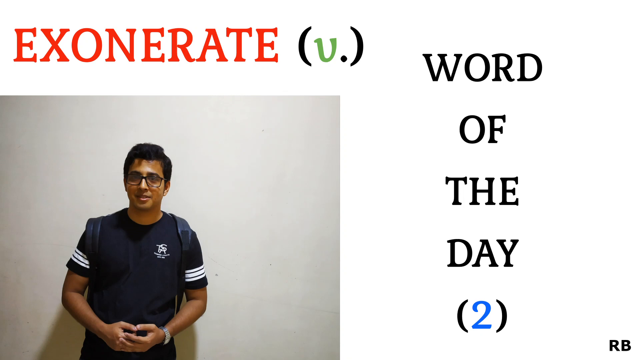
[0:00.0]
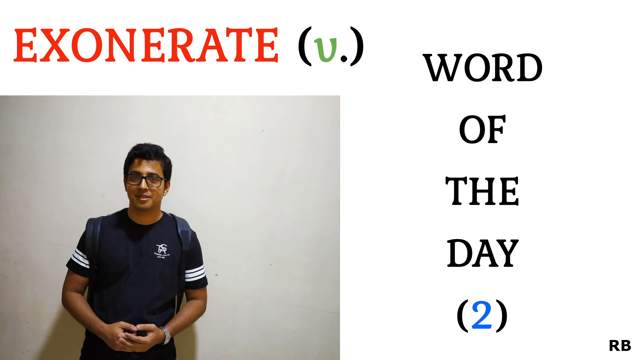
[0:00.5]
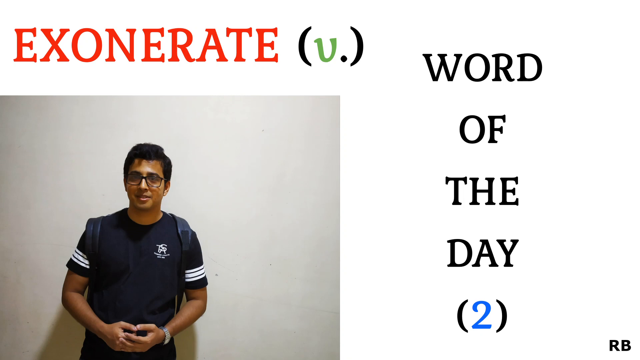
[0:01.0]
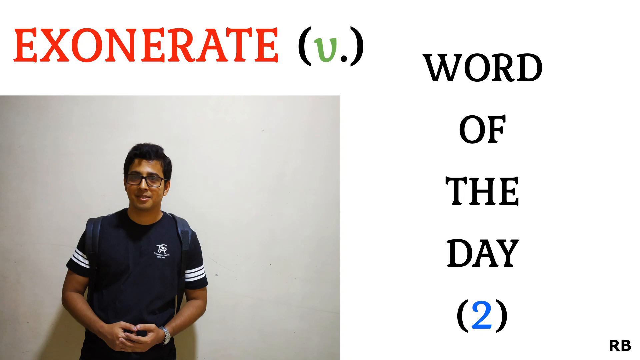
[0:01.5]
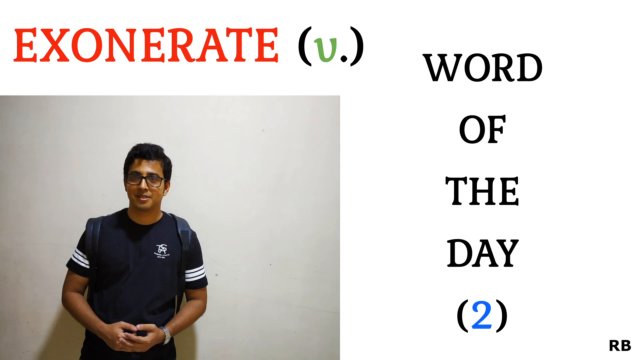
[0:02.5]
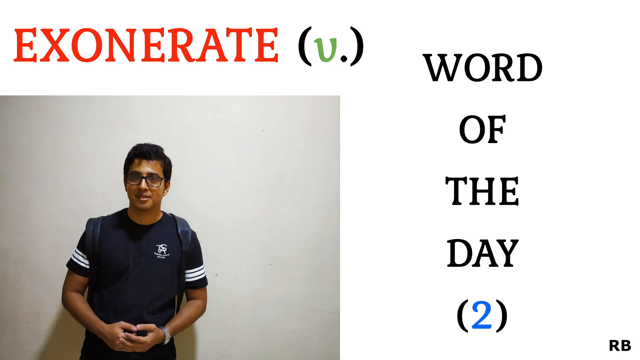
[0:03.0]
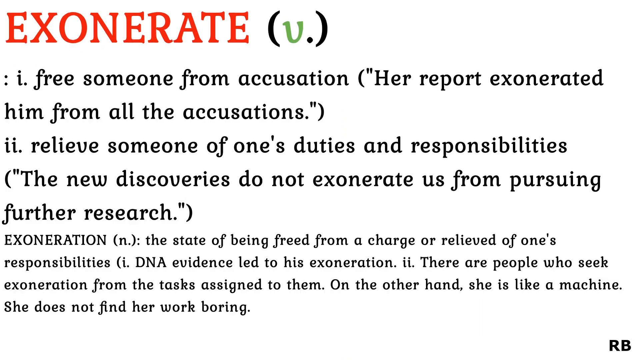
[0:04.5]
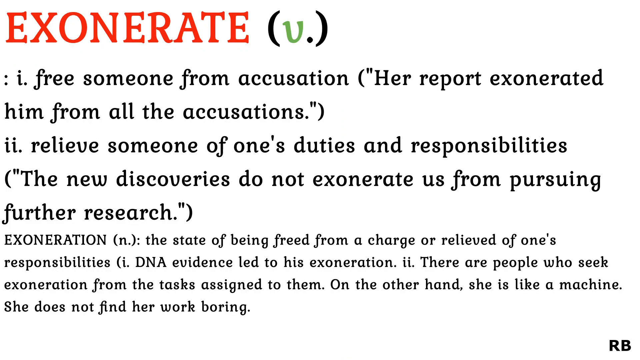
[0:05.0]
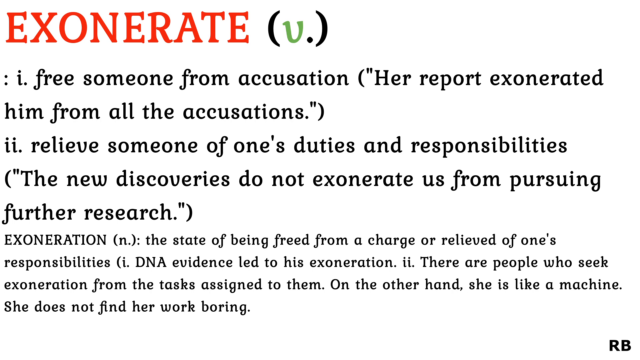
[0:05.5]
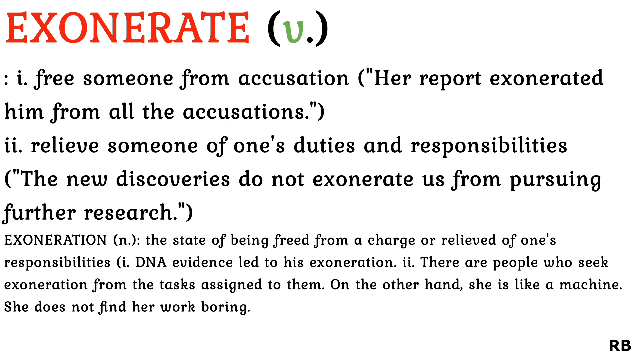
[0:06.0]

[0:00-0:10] In the top left corner, "EXONERATE" appears in red capital letters, followed by black parentheses containing a V, apparently standing for verb. On the right-hand side it says "Word of the Day", also in black parentheses, with blue as well. A person is standing, only partly visible; he wears a black short-sleeve t-shirt with white stripes on the sleeves, glasses, and a backpack whose black back straps are visible. Text then reads "exonerate" with an I and a dot marking more than one meaning: "frees someone from accusation" with the example in parentheses "her report exonerated him from all accusations", and a second meaning, "relieves someone of one's duties and responsibilities", with the example "the new discoveries do not exonerate us from pursuing further research."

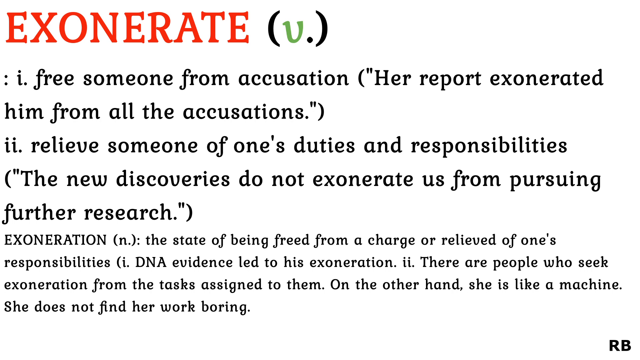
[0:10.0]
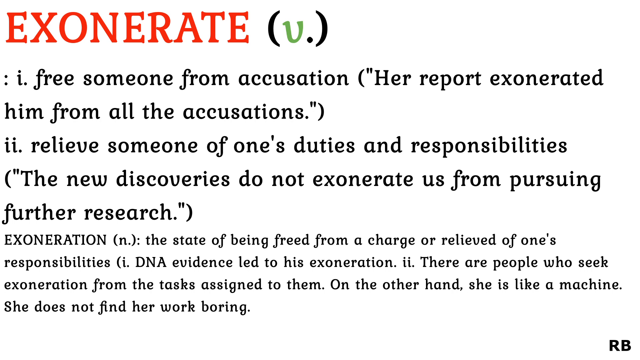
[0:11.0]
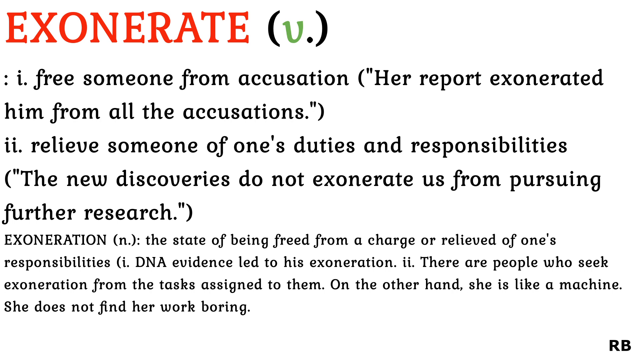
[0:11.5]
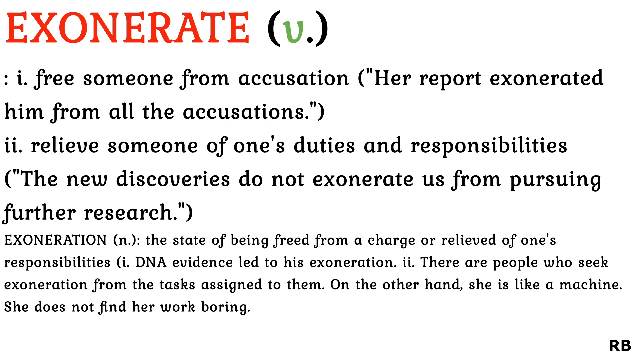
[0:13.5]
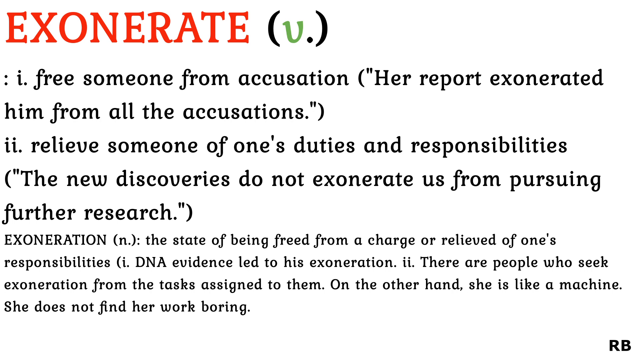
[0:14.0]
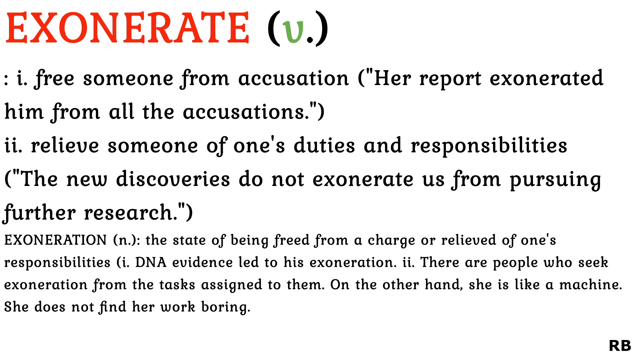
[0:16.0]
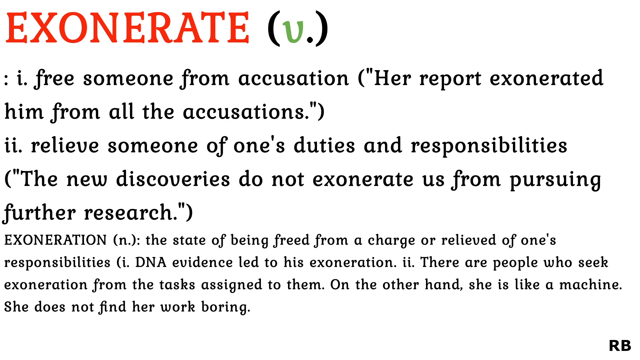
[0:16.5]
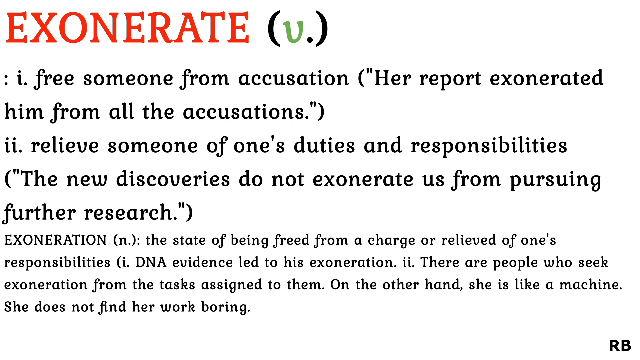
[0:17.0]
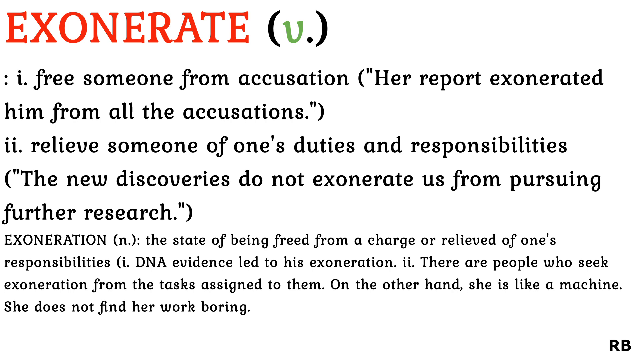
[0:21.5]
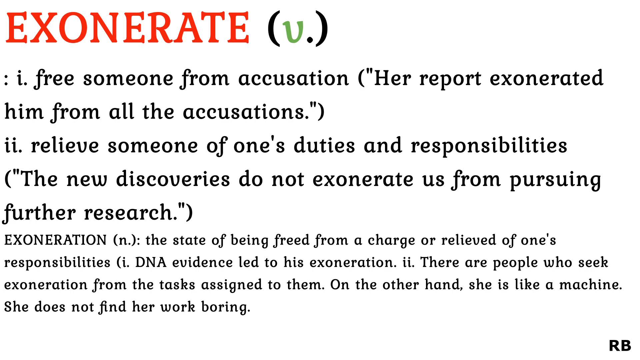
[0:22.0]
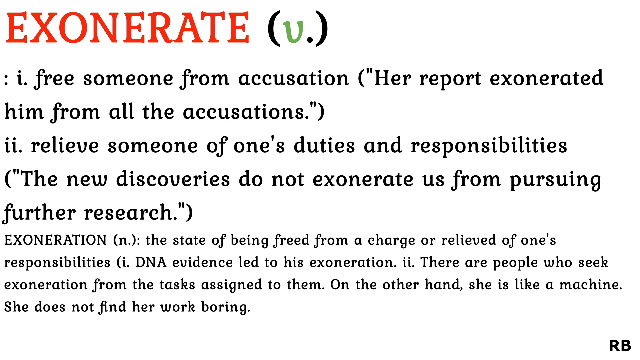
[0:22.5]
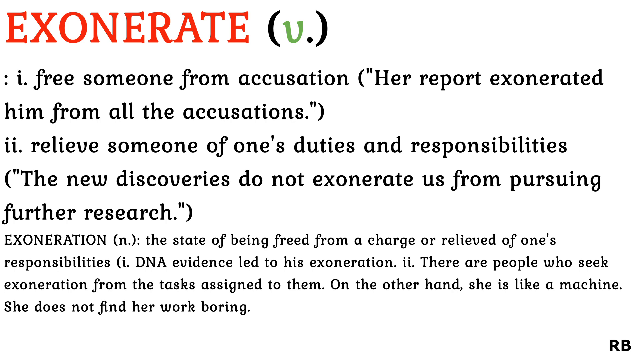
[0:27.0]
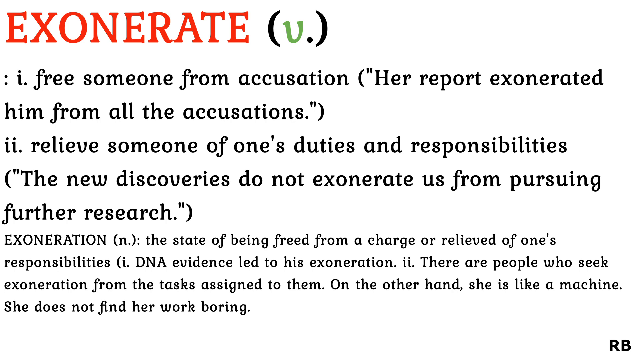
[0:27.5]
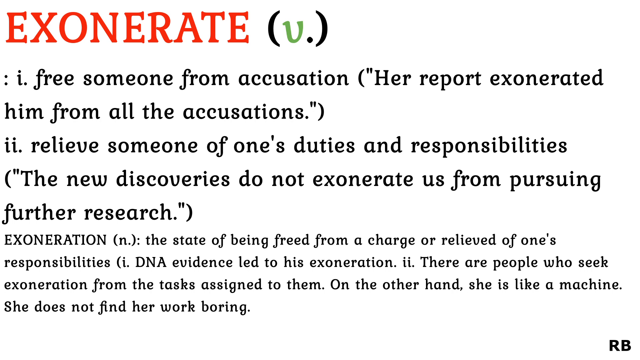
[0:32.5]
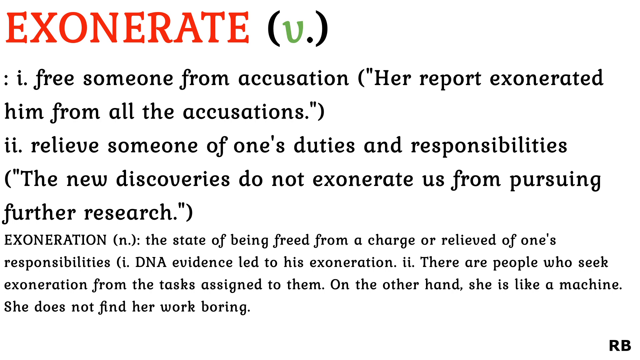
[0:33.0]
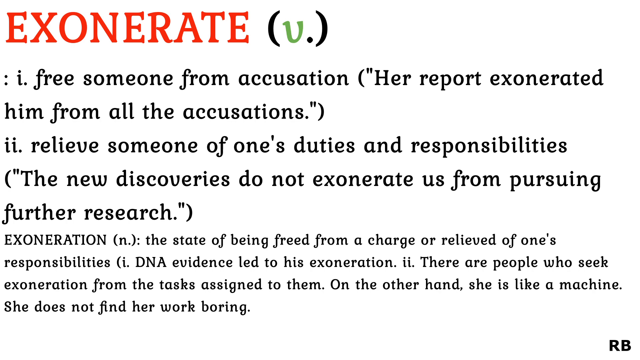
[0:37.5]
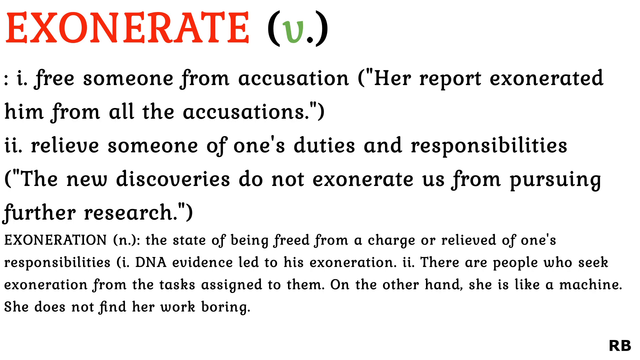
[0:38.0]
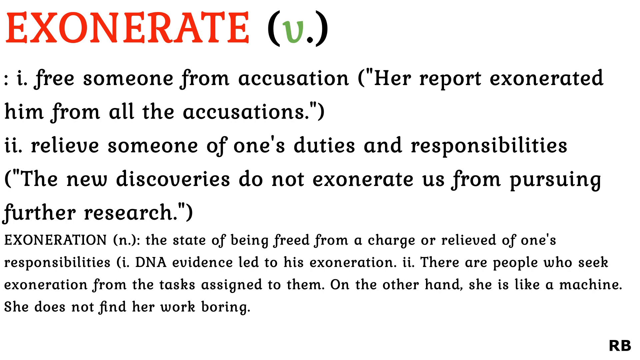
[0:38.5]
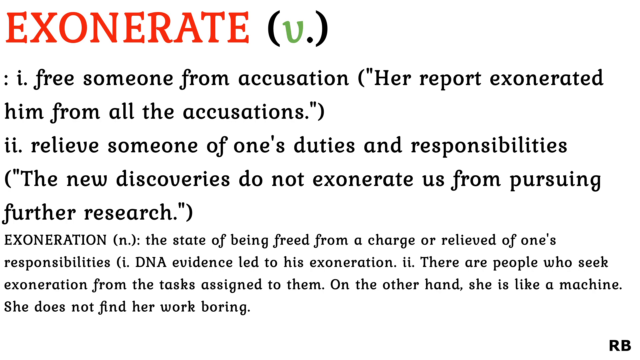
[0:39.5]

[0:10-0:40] The word "EXONERATE" is shown in red capital letters, with black parentheses containing a green V. The text reads "free someone from accusation", with the example in parentheses "her report exonerated him from all the accusations", and another meaning, "release someone of one's duties and responsibilities", with the example "the new discoveries do not exonerate us from pursuing further research." Below, "exoneration" is marked as a noun and defined as "the state of being freed from a charge or relieved of one's responsibilities", with the examples "DNA evidence led to his exoneration" and "there are people who seek exoneration from the tasks assigned to them on the other hand she is like machine she does not find her work boring." The background is white, and in the lower right-hand corner "RB" appears in bold black capital letters, possibly the initials of the dictionary or book being used.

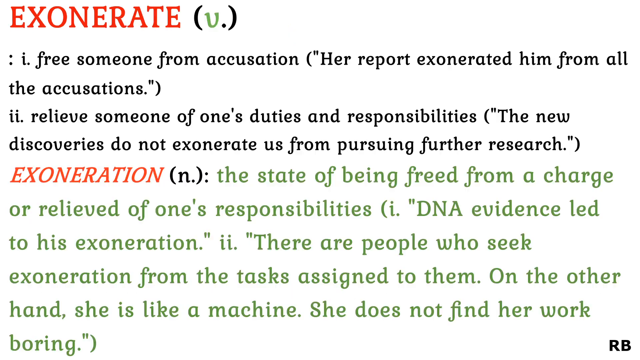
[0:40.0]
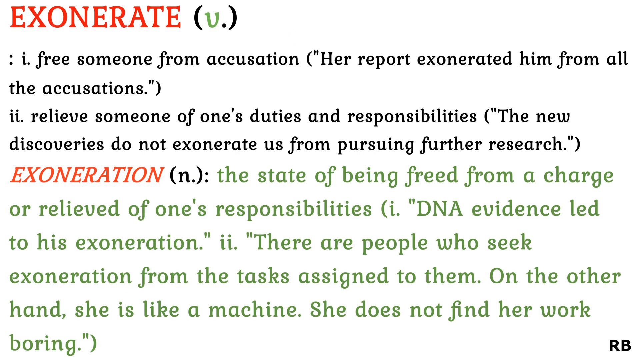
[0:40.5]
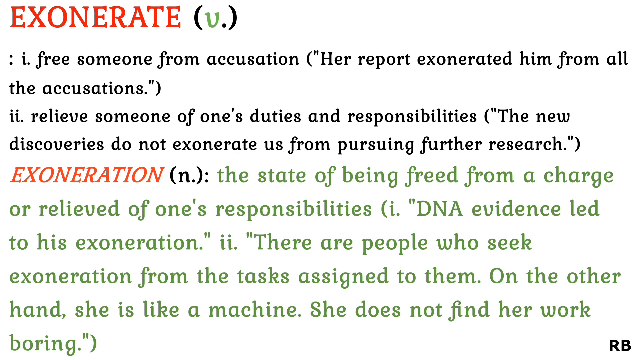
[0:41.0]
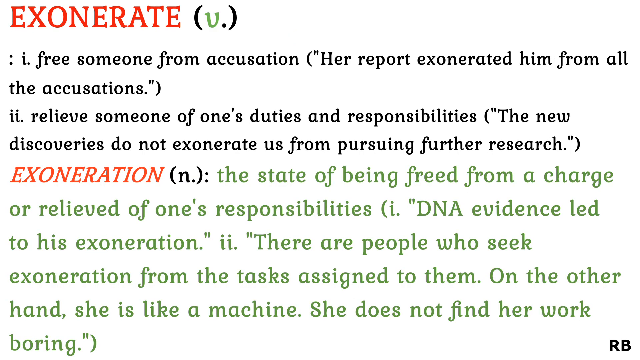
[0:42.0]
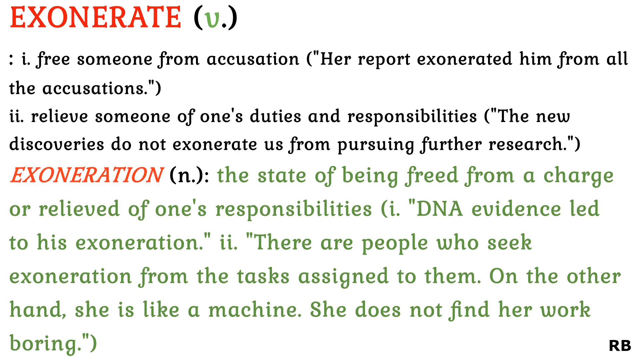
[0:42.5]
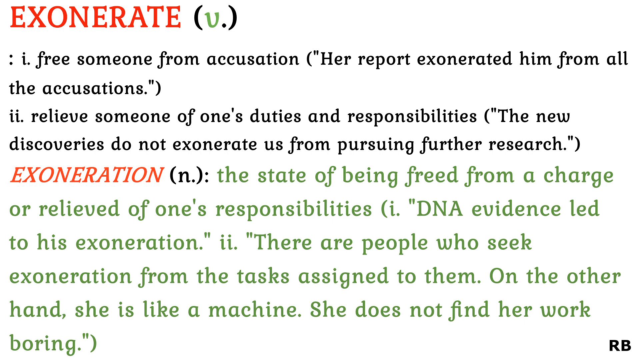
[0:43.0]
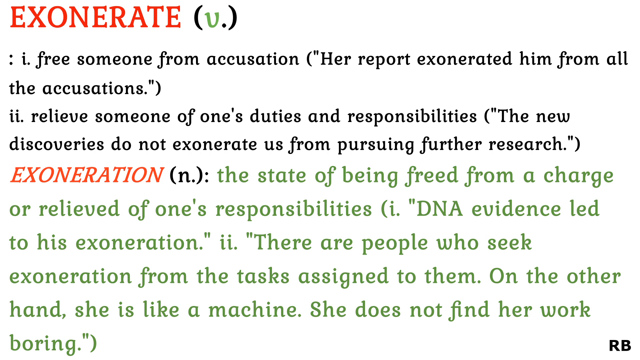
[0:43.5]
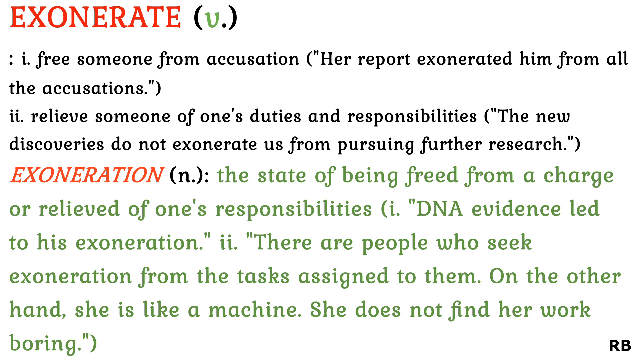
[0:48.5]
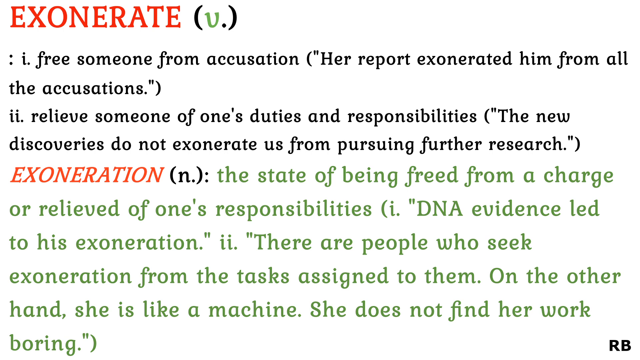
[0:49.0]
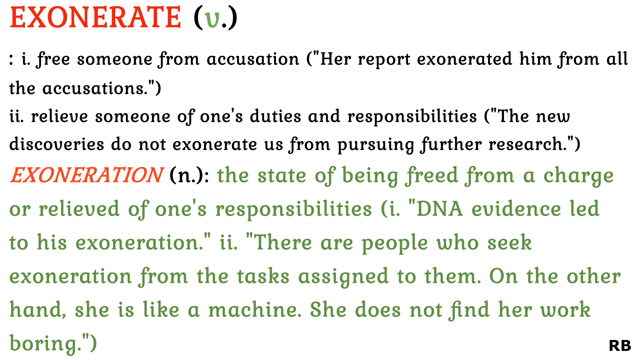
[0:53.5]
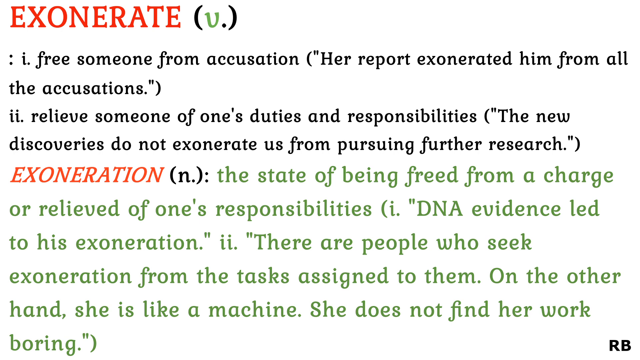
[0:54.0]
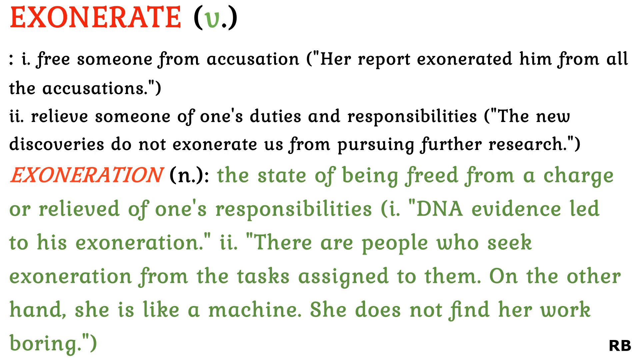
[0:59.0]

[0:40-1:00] The text shows "exonerate" with a V, followed by "release someone from accusation" and the example "her report exonerated him from all the accusations.", ending with a period, a closing quote and a closing parenthesis. A second meaning, marked with an I, reads "release someone of one's duties and responsibilities", and underneath it, in parentheses and quotes, "the new discoveries do not exonerate us from pursuing further research." In a smaller font, "EXONERATION" appears in all capital letters, with an N and a dot in parentheses, apparently meaning noun, and the definition "the state of being freed from a charge or relieved of one's responsibilities." After an opening parenthesis and an I with a dot comes "DNA evidence led to his exoneration.", with "DNA" in capital letters. Then, marked with two I's and a dot as another meaning, it reads "there are people who seek exoneration from the tasks assigned to them. On the other hand, she is like machine. She does not find her work boring."